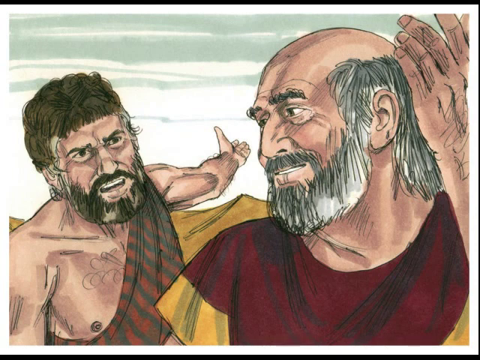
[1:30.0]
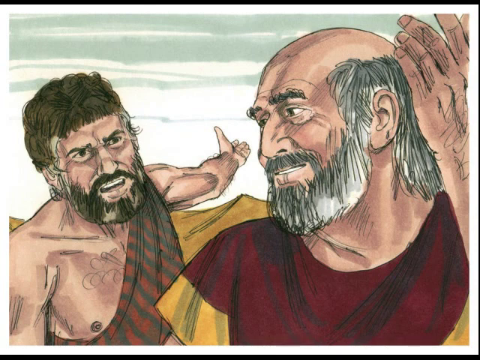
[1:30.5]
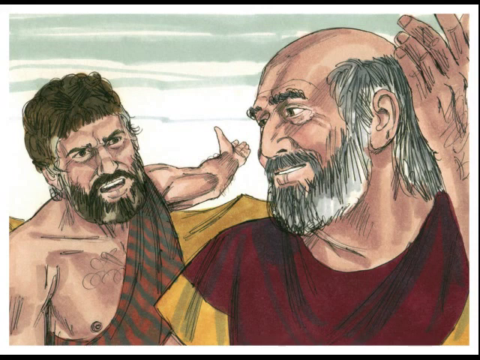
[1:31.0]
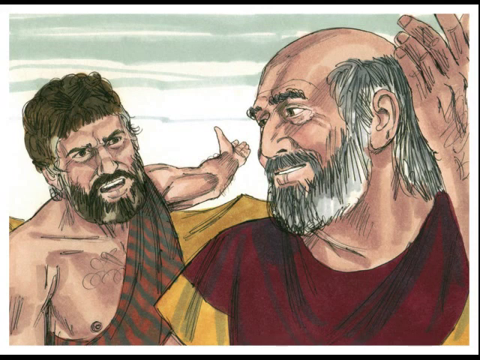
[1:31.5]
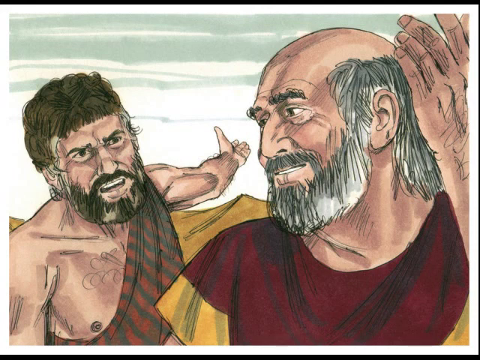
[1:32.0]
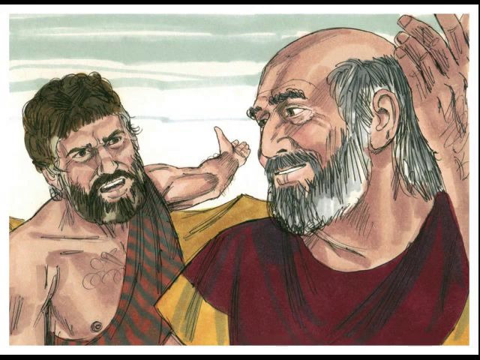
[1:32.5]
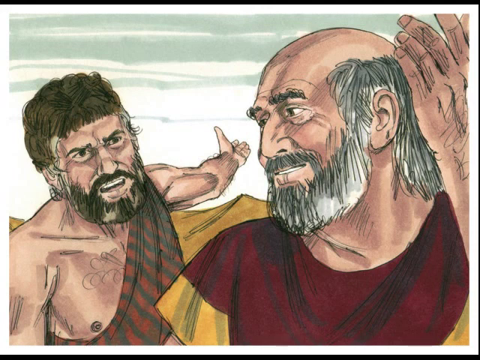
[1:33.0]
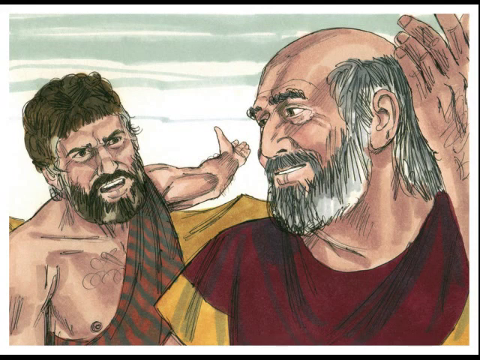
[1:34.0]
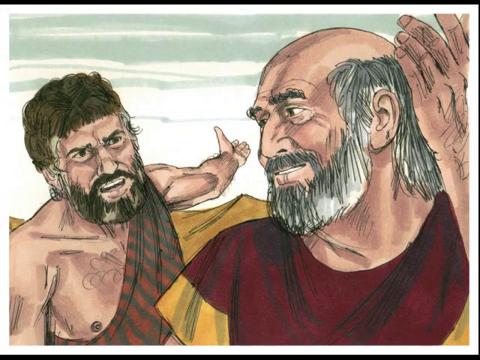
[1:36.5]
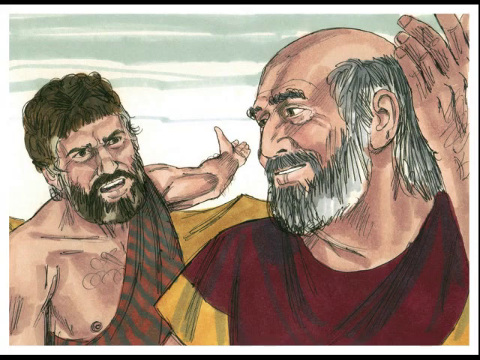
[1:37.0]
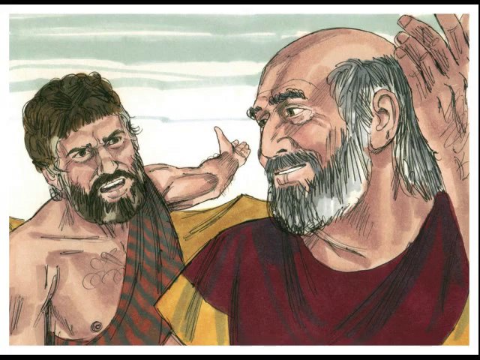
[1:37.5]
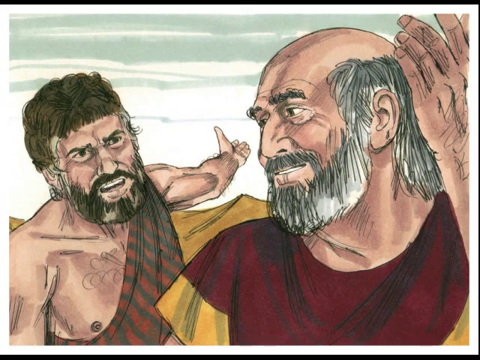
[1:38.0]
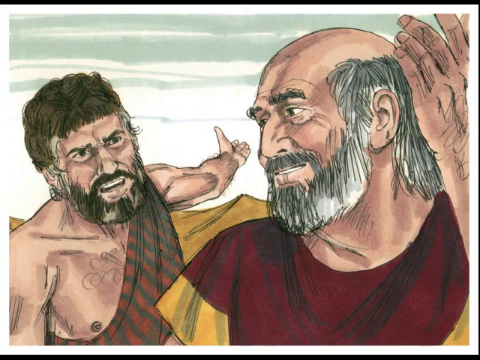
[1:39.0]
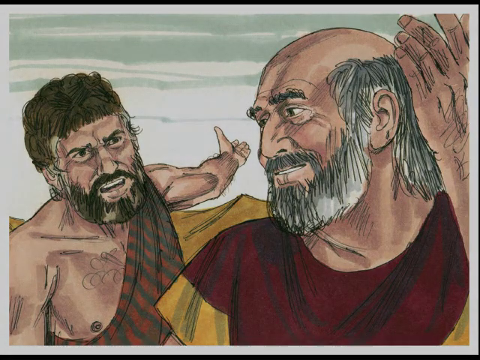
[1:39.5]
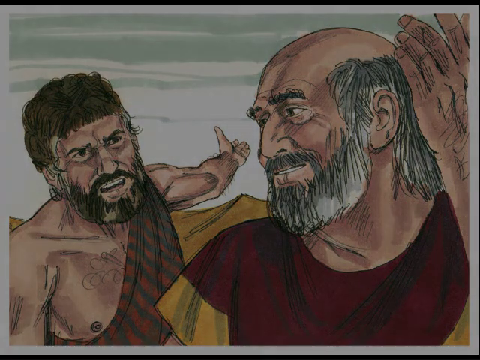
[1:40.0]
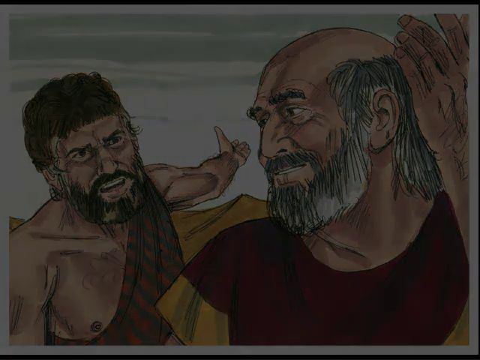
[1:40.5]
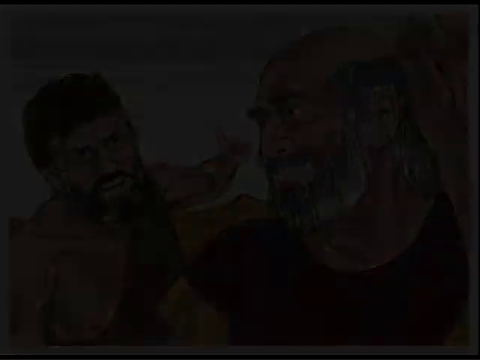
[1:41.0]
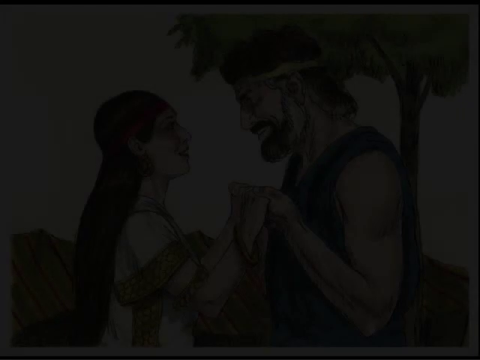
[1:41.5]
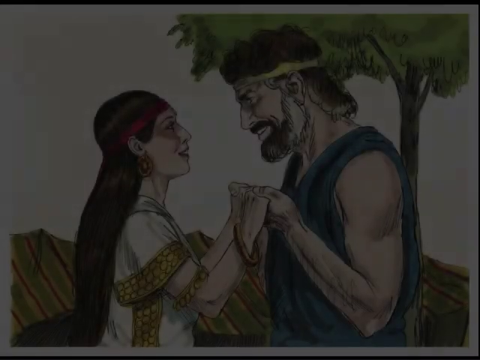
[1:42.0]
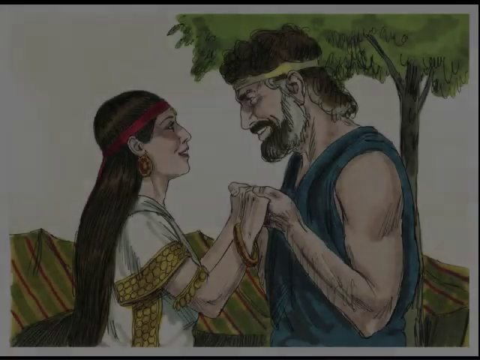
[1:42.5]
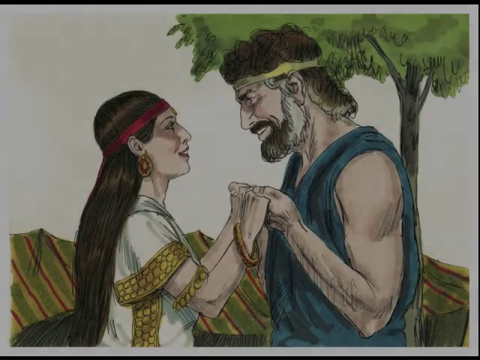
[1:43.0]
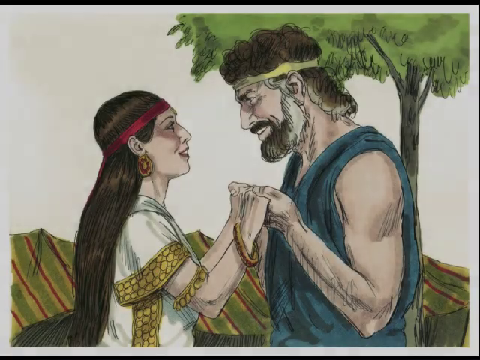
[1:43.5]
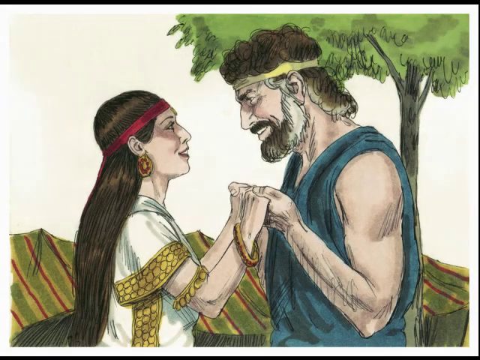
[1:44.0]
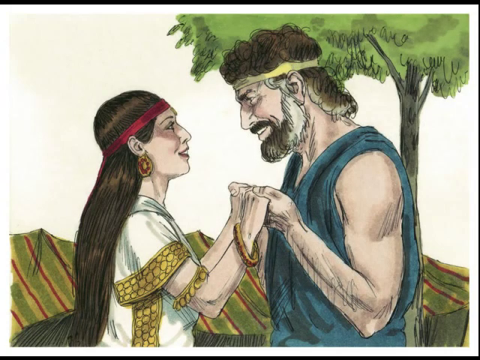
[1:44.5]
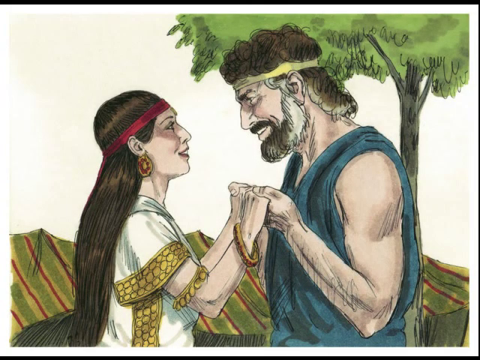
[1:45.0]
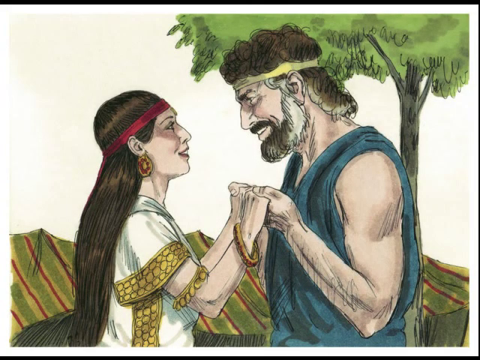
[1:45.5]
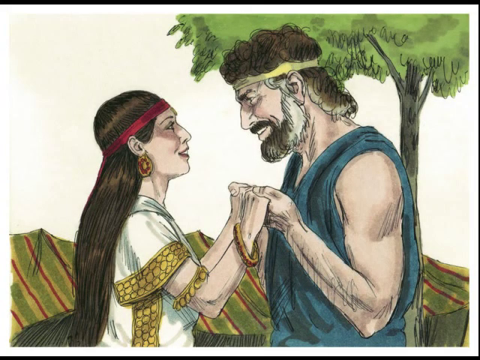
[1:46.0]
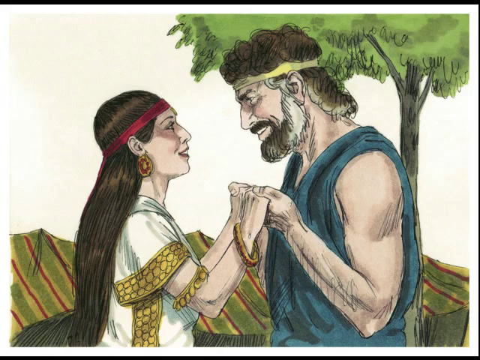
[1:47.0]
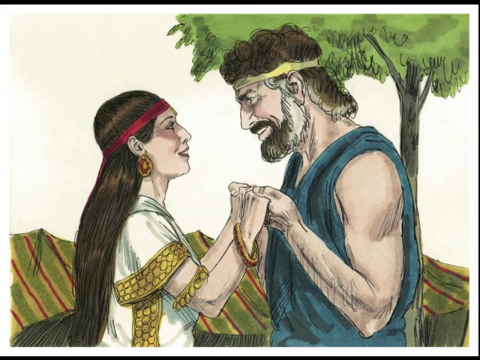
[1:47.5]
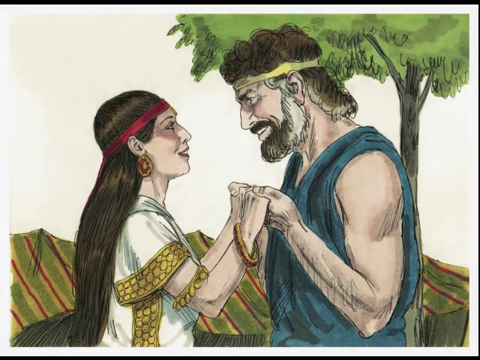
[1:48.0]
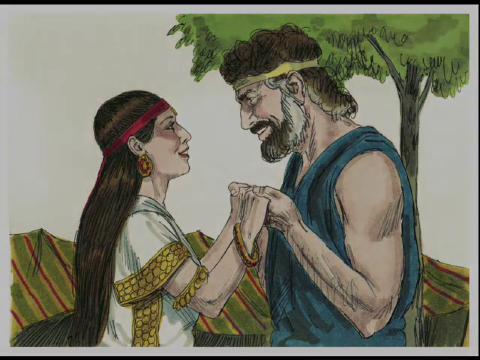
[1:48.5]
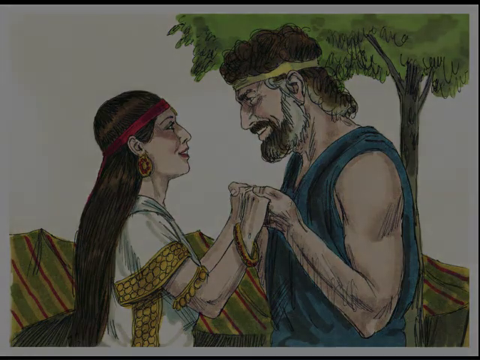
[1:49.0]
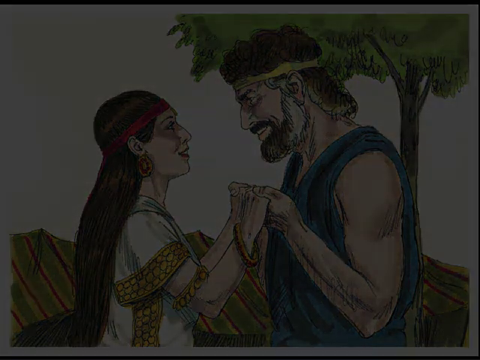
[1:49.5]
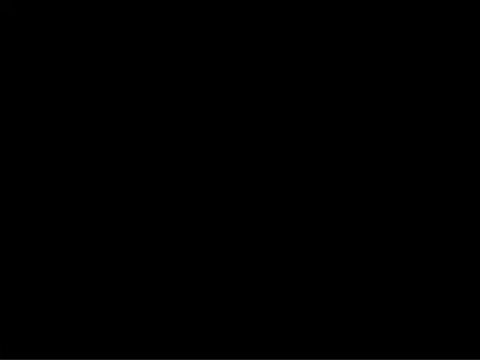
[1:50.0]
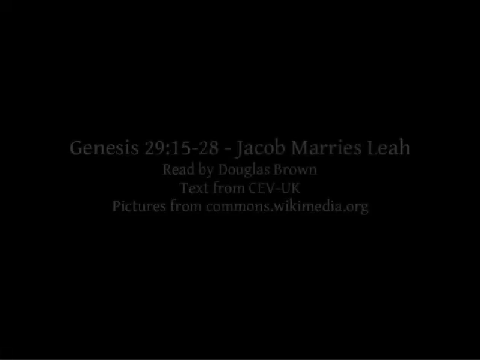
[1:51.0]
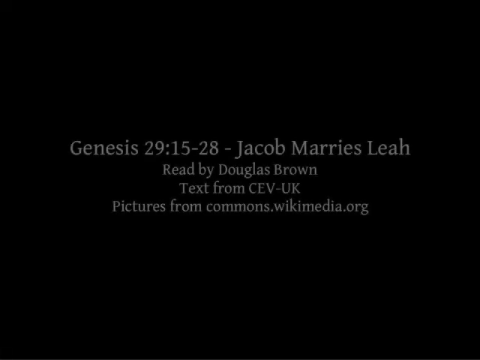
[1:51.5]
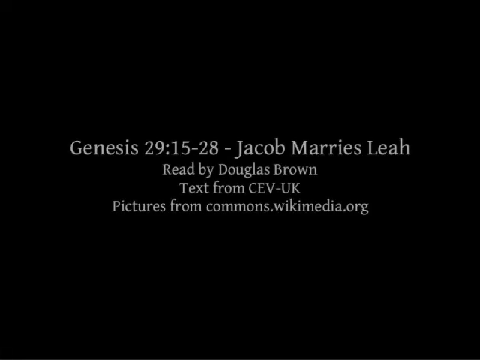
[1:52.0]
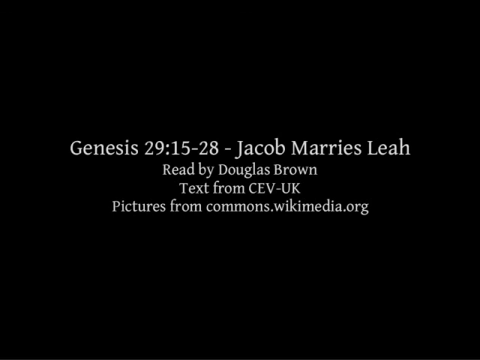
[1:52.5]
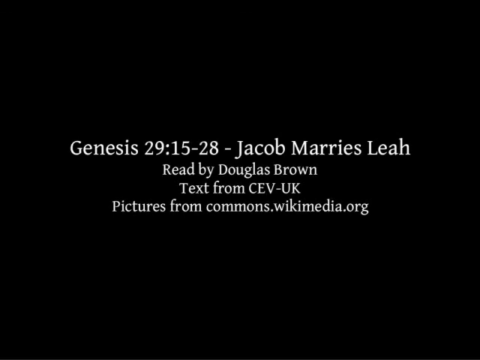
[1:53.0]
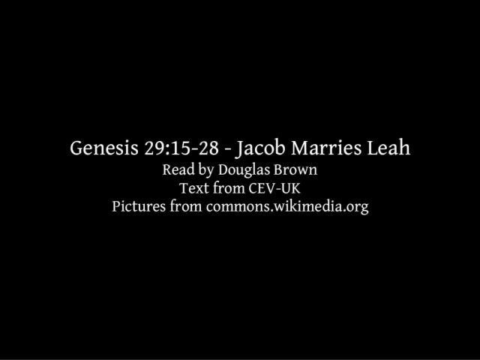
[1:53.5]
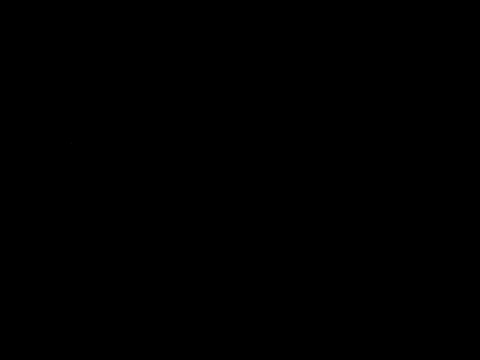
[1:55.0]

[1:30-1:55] A rendering shows two men. The man on the left shows his whole face; the man on the right is slightly in front of him and appears to be turning his head to look over his right shoulder at him. They seem to be in some kind of intense discussion, maybe an argument. The man on the left has his left arm stretched out behind him, as if gesturing to the open, grassless field behind him, and looks very intently at the older man with an expression verging on anger, or at least frustration. The older man has a slight grin and makes a gesture with his right hand that almost says "Meh," as if he is not at all convinced by what the younger man is telling him.